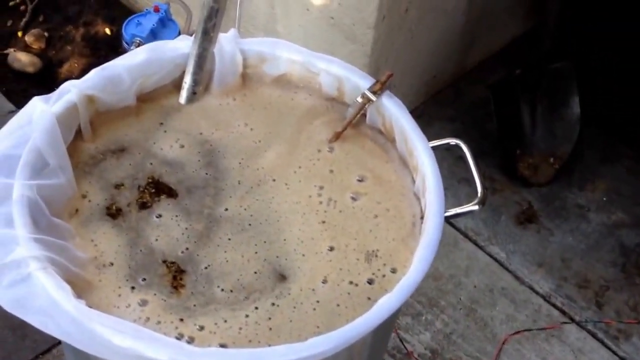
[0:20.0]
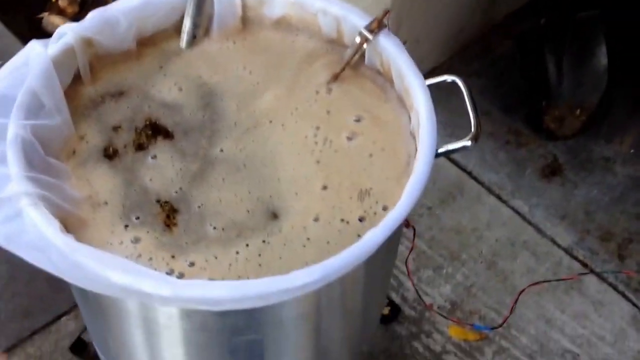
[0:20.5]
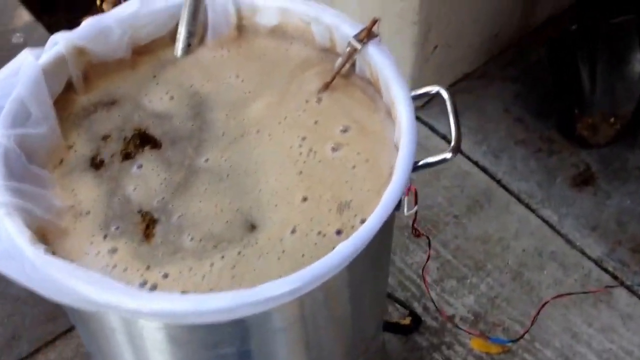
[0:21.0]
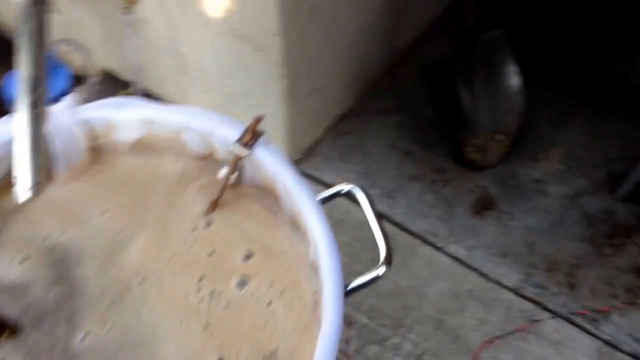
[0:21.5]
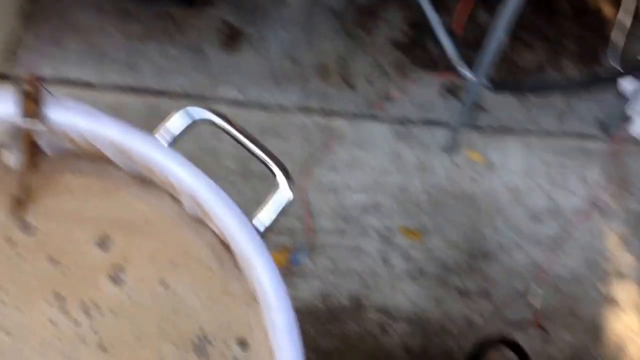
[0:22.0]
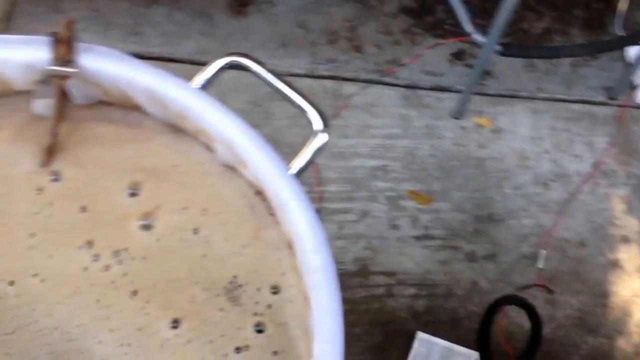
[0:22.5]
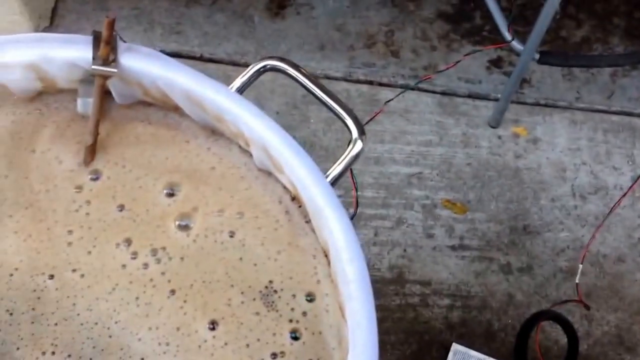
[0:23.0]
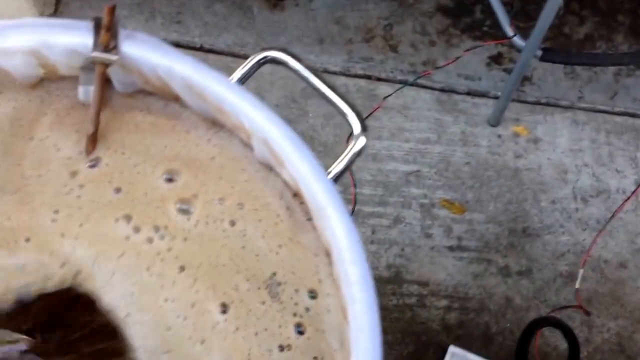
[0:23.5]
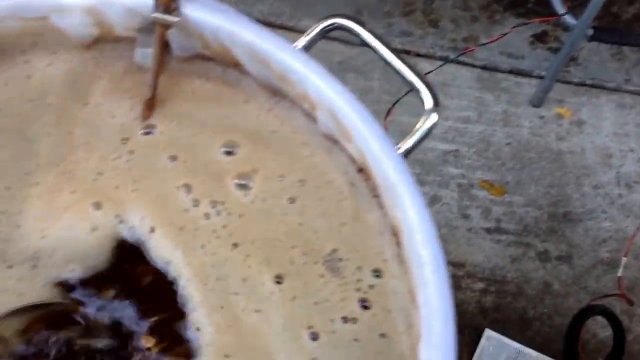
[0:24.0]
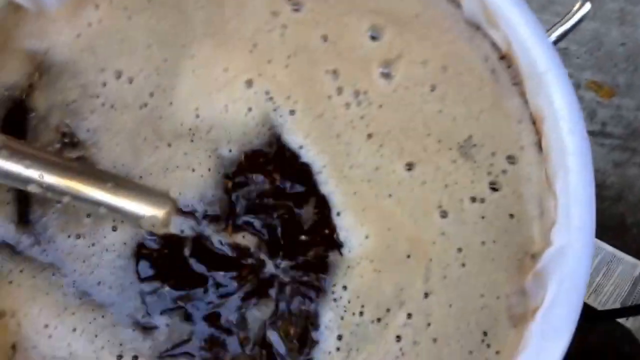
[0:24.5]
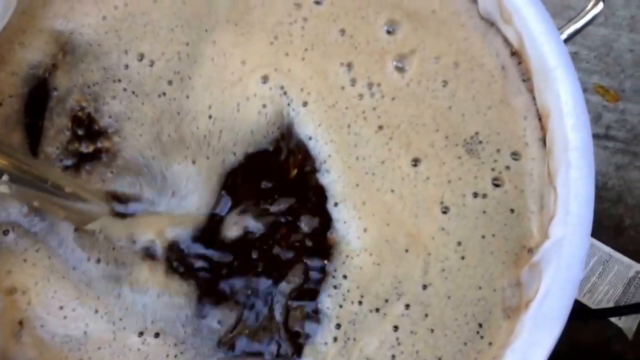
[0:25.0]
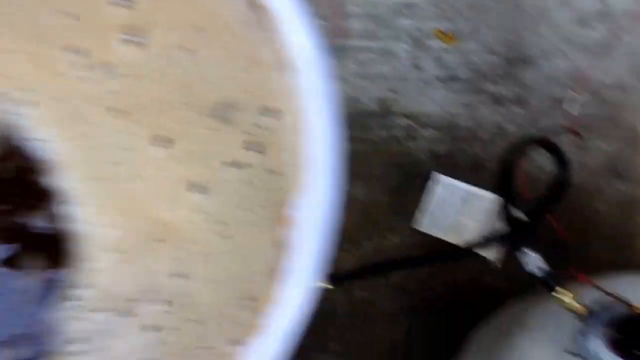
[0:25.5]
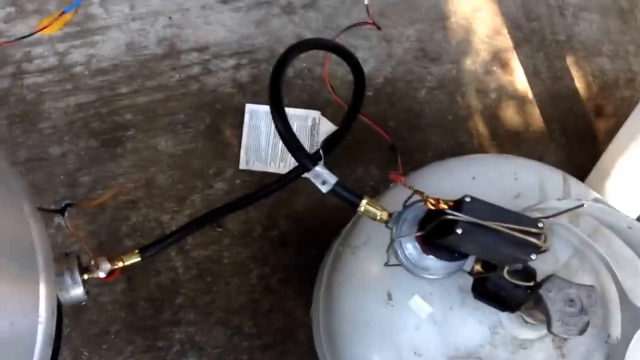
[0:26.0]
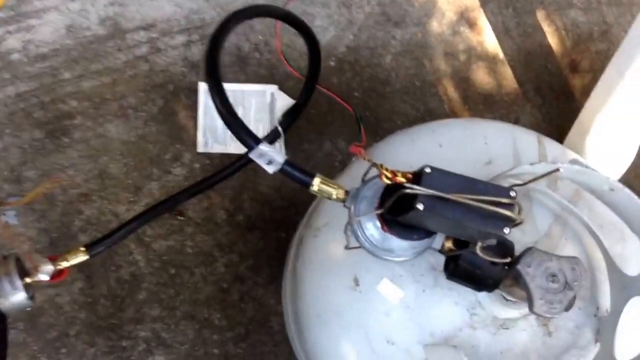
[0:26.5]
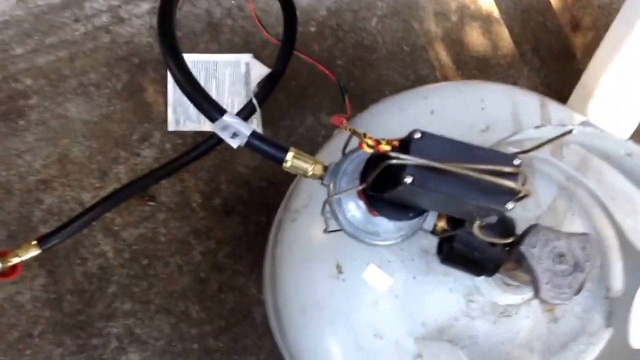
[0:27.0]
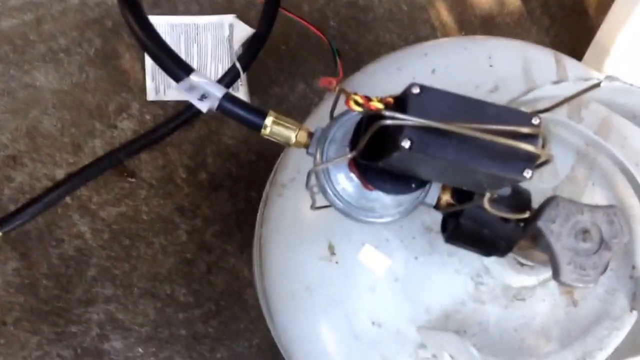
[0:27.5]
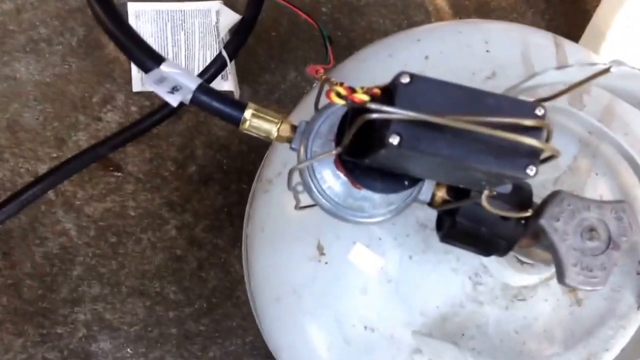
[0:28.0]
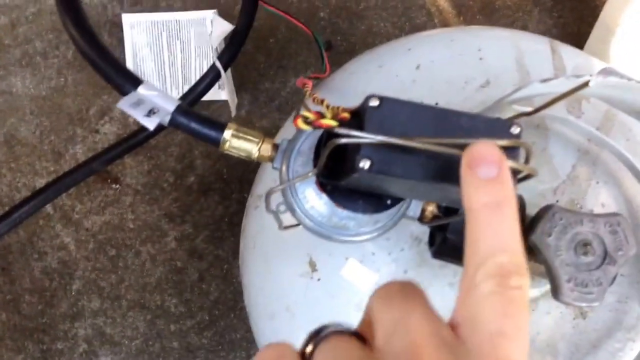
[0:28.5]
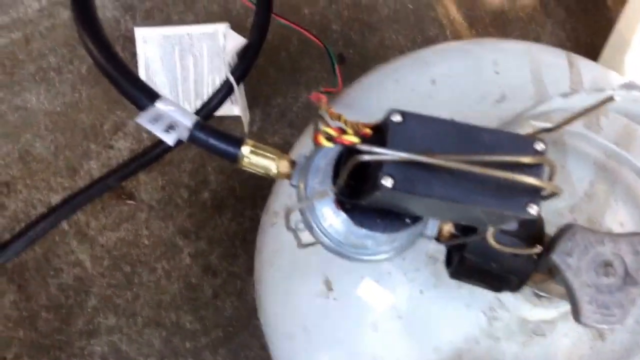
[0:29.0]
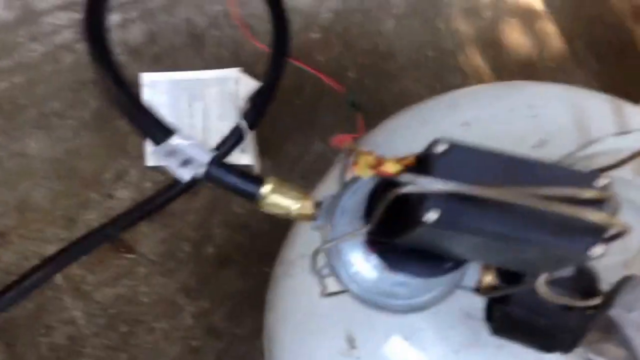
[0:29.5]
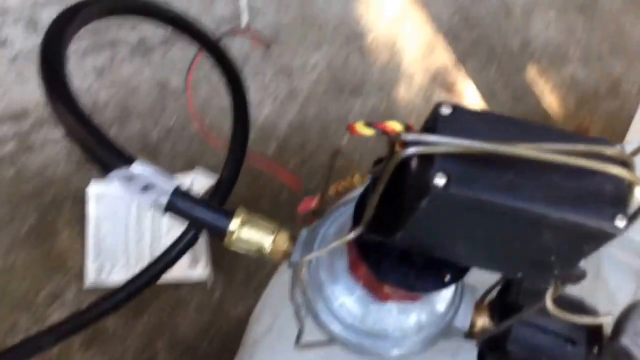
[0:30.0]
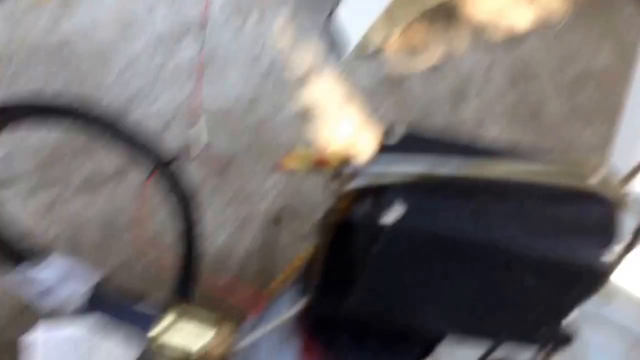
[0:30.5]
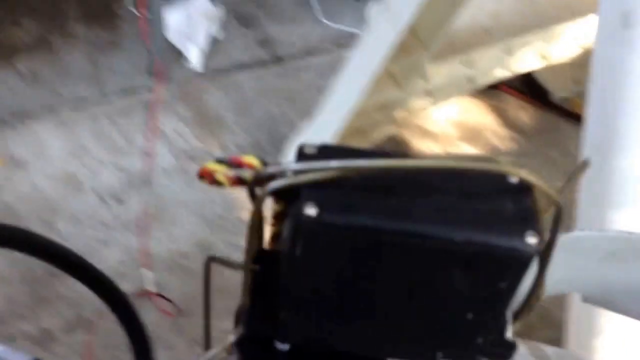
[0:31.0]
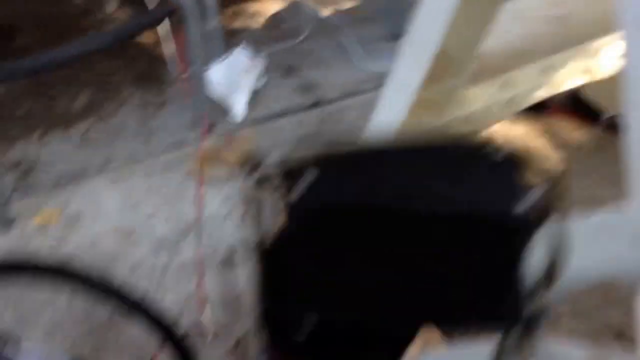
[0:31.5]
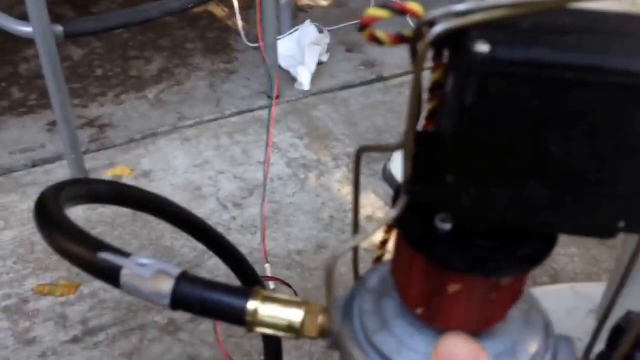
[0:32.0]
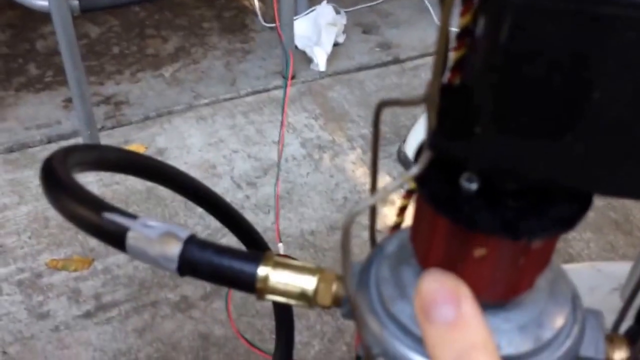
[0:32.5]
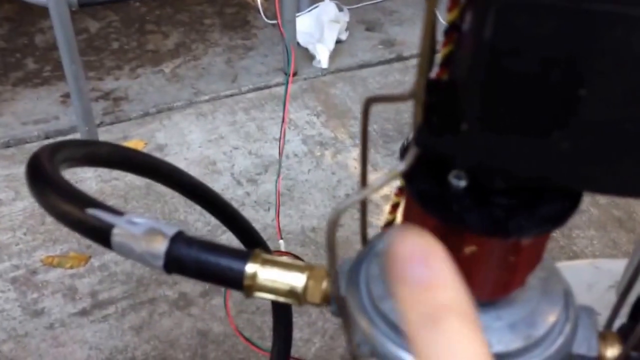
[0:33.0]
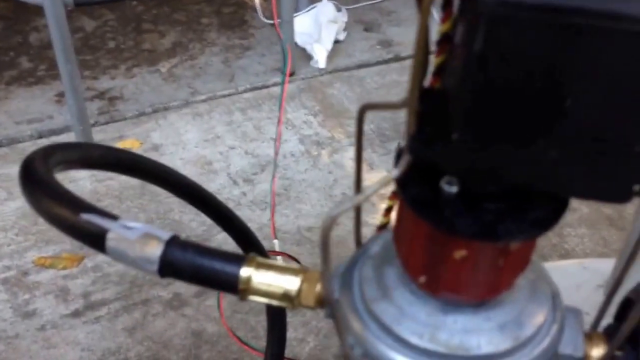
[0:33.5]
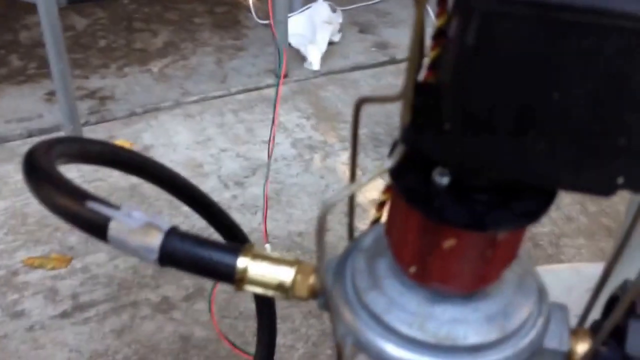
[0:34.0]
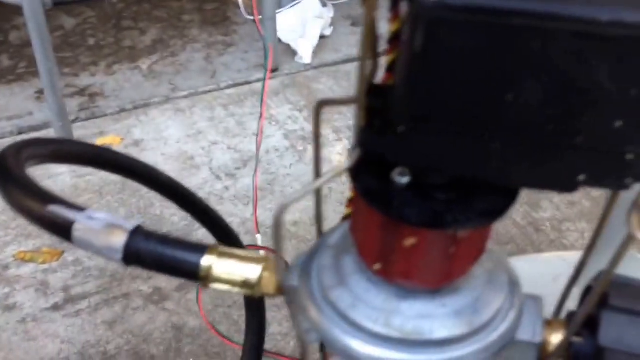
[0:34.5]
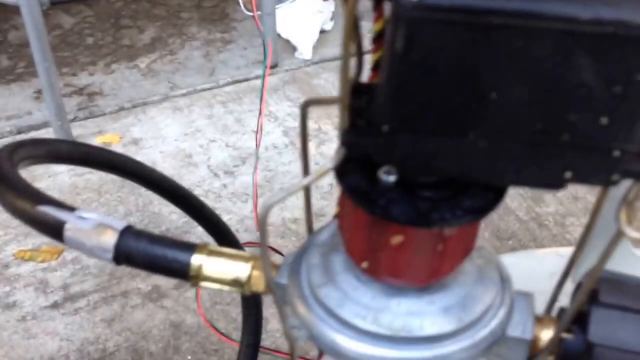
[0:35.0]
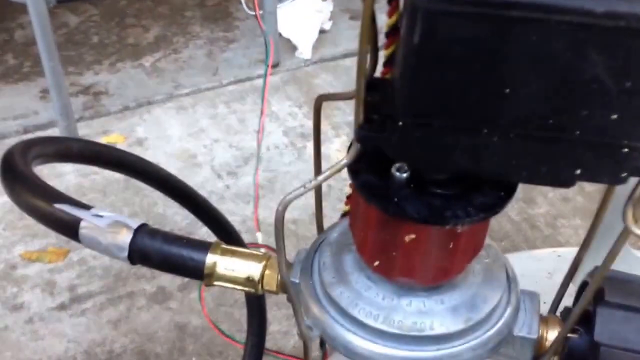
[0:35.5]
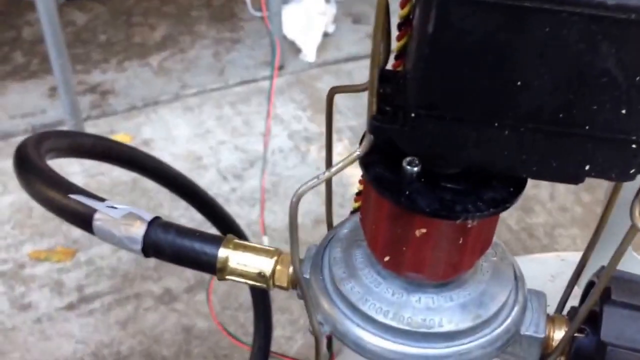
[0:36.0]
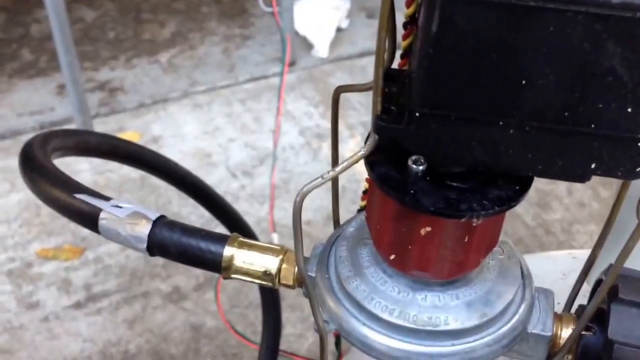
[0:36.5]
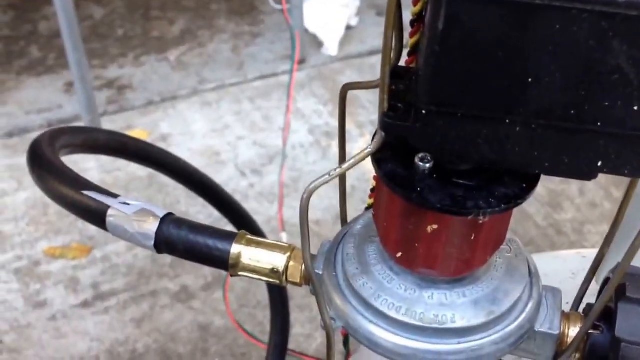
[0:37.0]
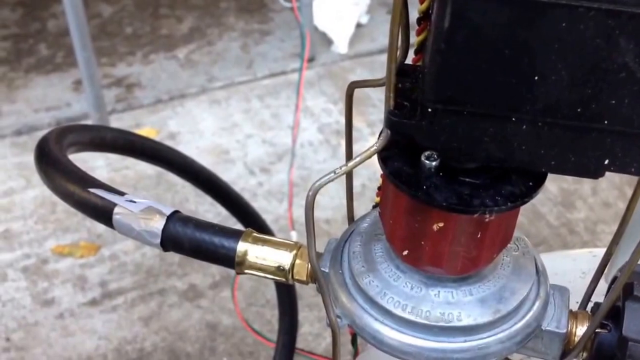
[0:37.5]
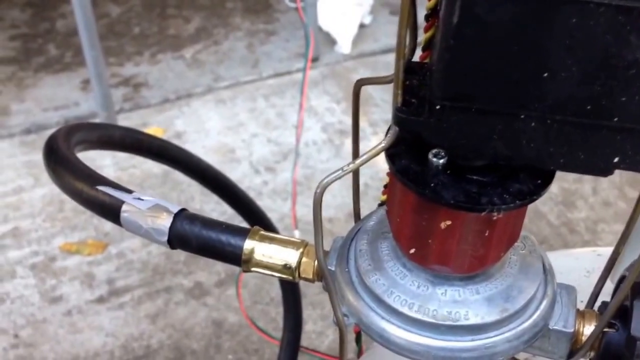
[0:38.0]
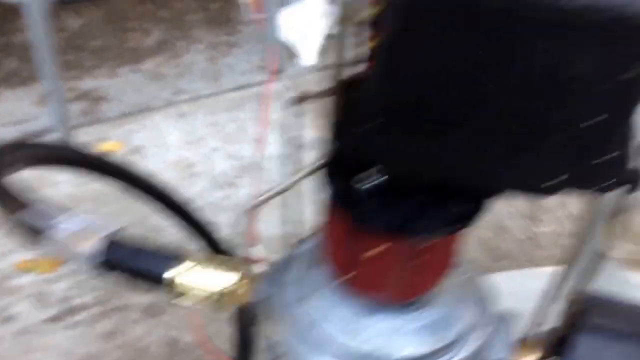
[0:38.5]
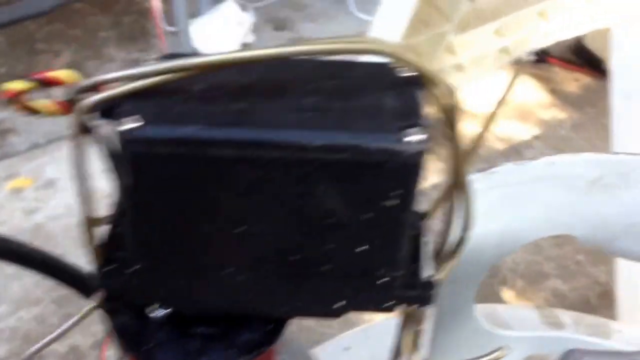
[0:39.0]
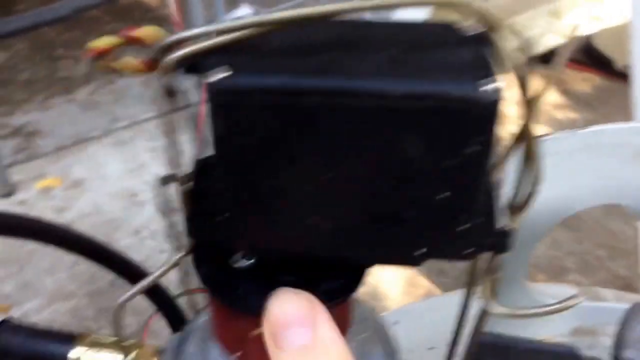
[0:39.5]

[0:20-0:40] A muslin bag is placed around the edges of a large metal pan and inside it. In the pan and muslin bag is a large quantity of brown liquid with cream foam on top, along with a metal stirrer and a thermometer. The camera pans around the pan, and the stirrer is used to disturb the liquid. The camera then zooms in on what appears to be a gas canister attached via a black hose to a camping cooker under the pan. On top of the gas canister valve is what appears to be a black electronic device attached with electrical wires, and the camera operator points at the valve and this device with a finger. The electrical wires come up and attach to what appears to be a temperature probe inserted into the brown liquid in the pan.